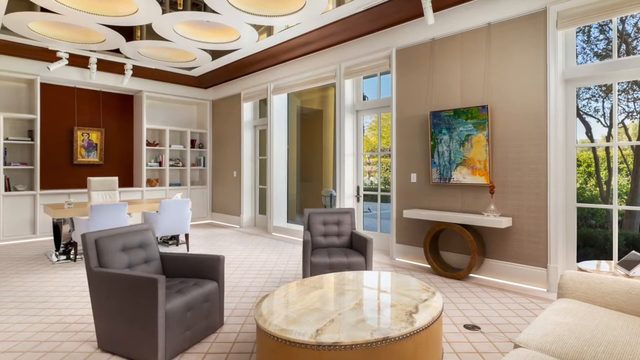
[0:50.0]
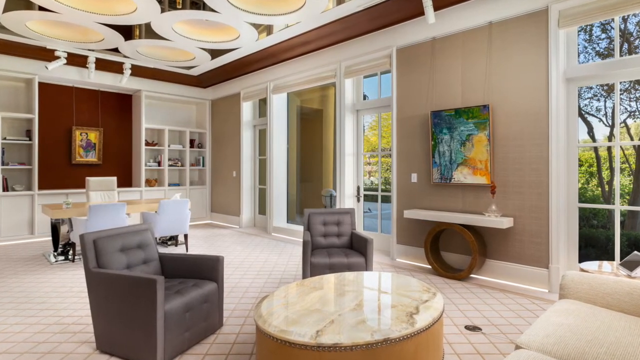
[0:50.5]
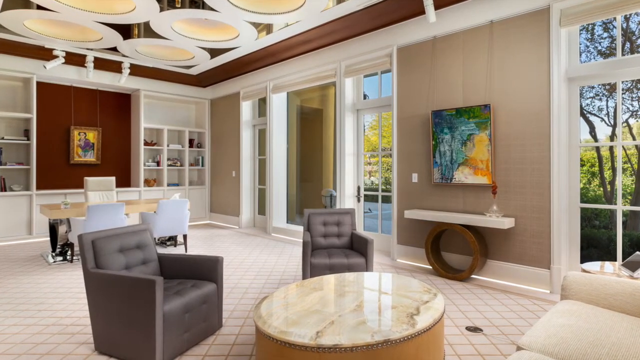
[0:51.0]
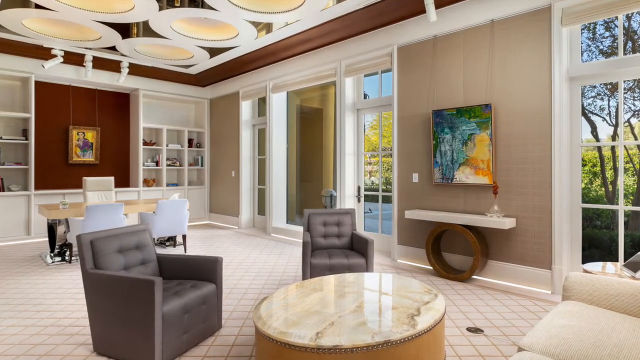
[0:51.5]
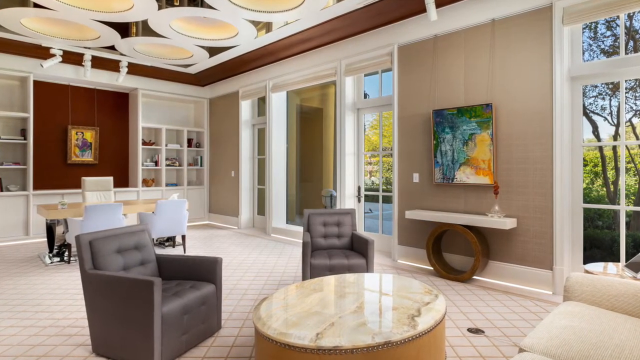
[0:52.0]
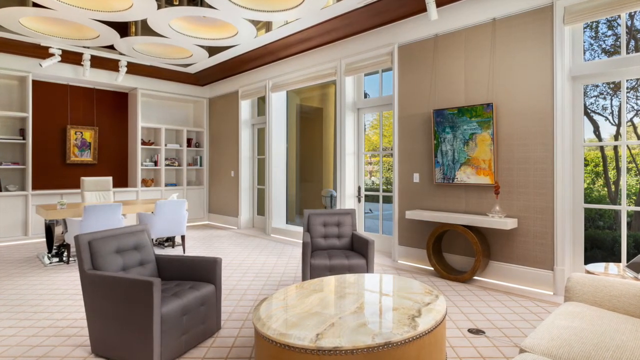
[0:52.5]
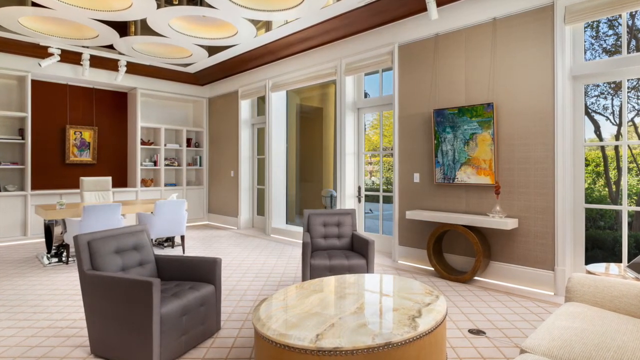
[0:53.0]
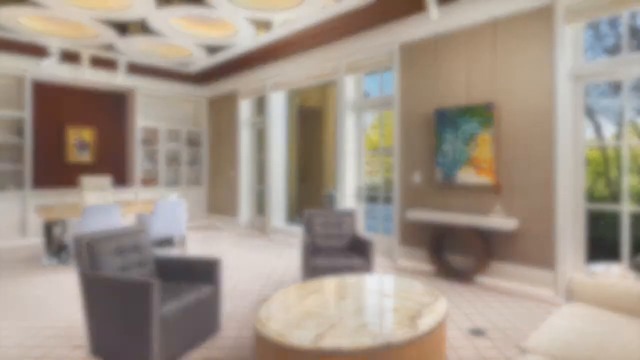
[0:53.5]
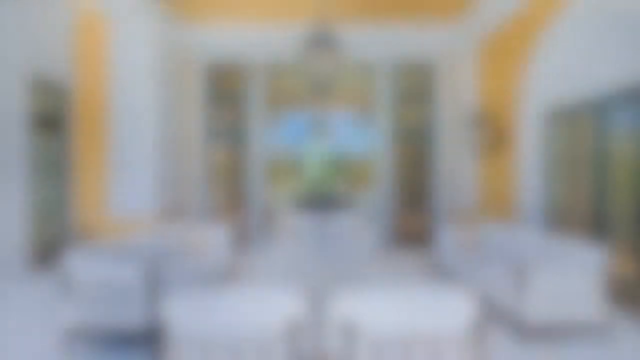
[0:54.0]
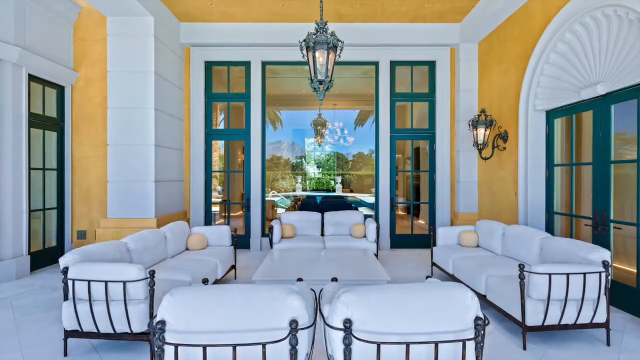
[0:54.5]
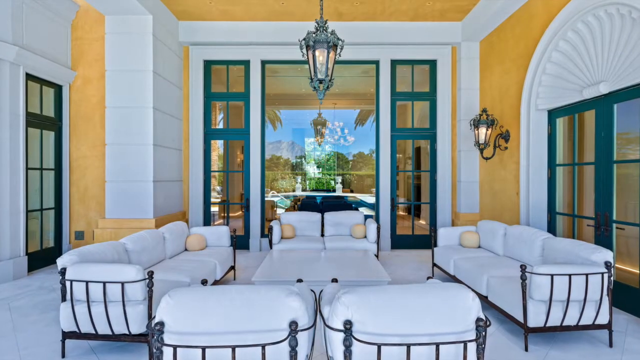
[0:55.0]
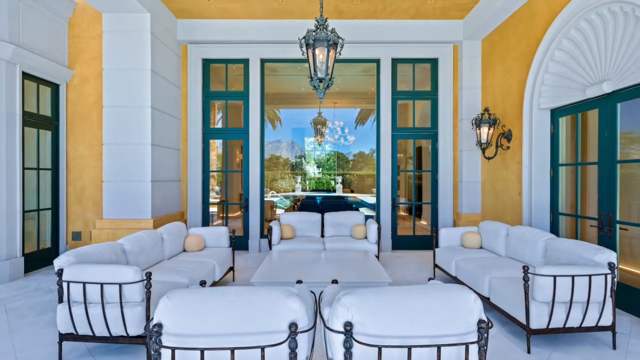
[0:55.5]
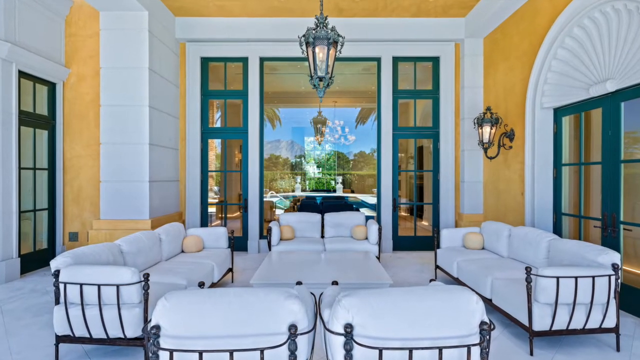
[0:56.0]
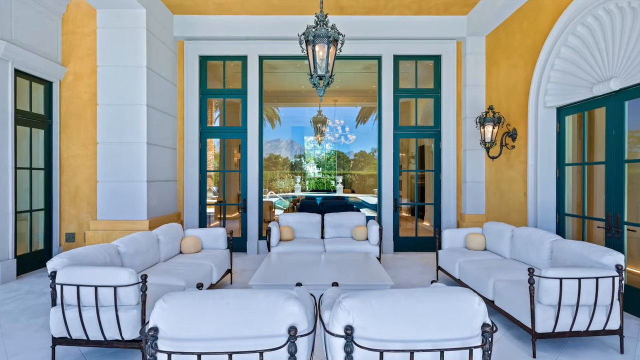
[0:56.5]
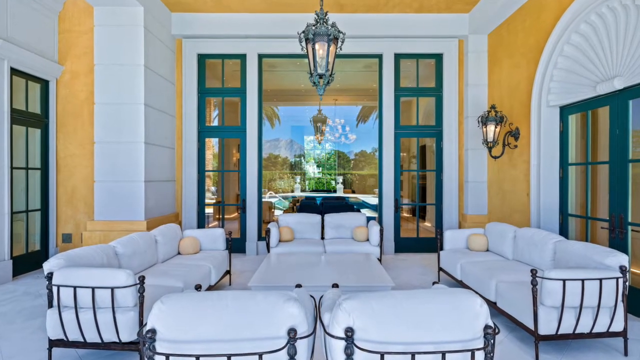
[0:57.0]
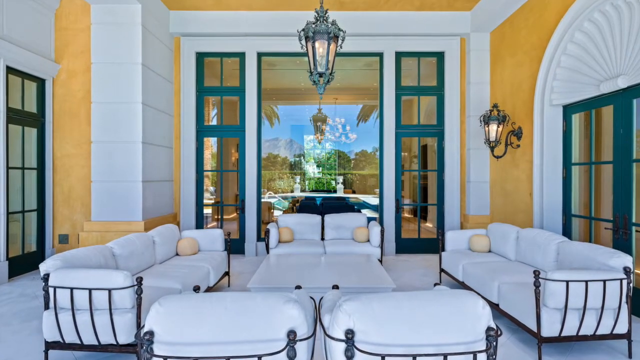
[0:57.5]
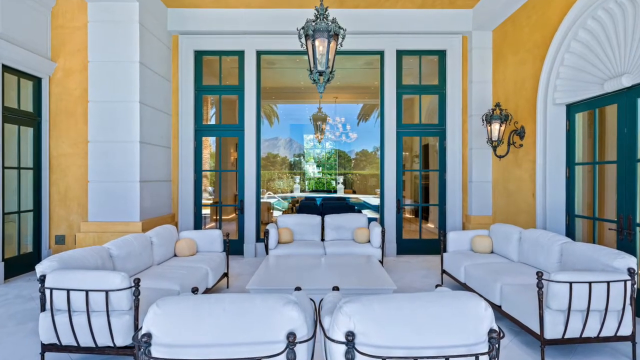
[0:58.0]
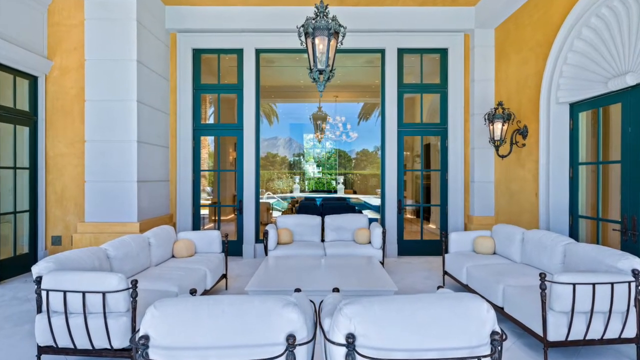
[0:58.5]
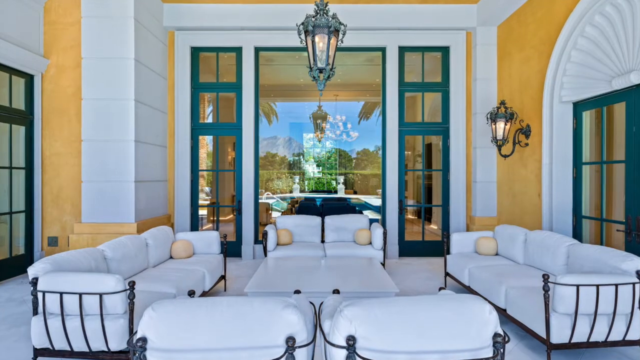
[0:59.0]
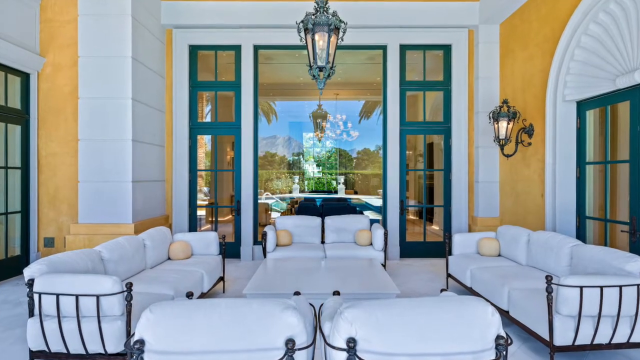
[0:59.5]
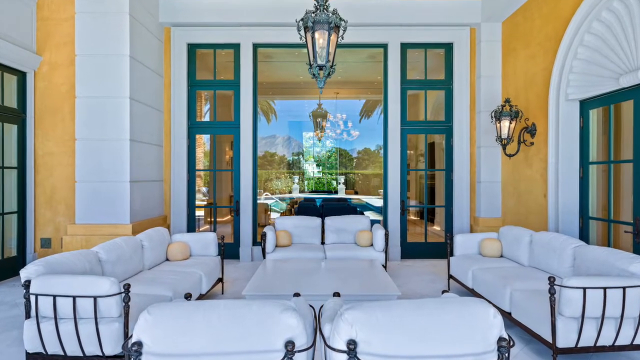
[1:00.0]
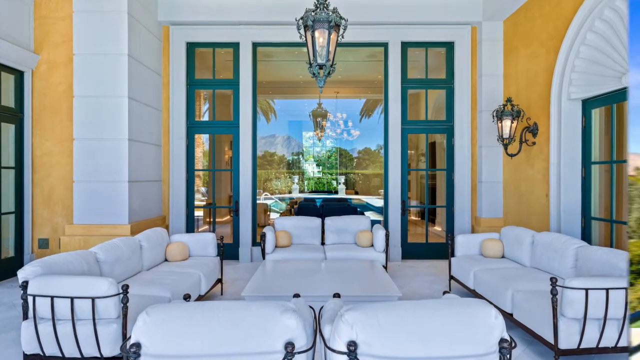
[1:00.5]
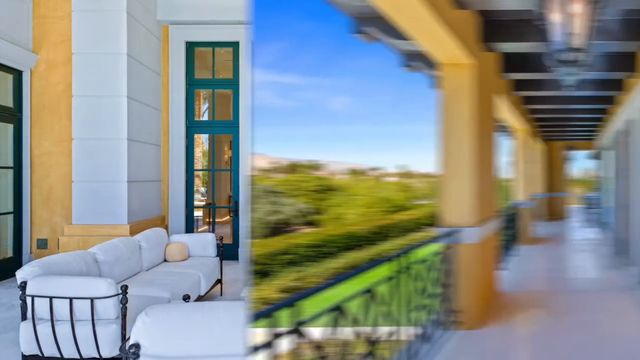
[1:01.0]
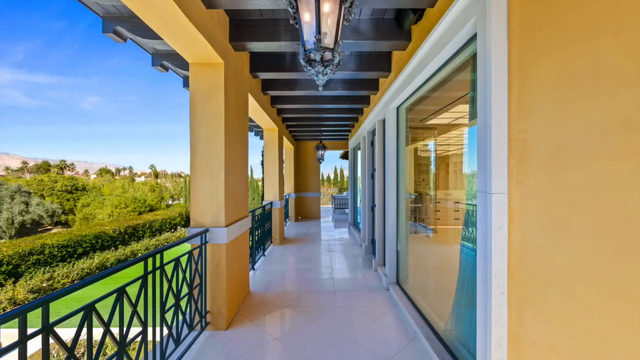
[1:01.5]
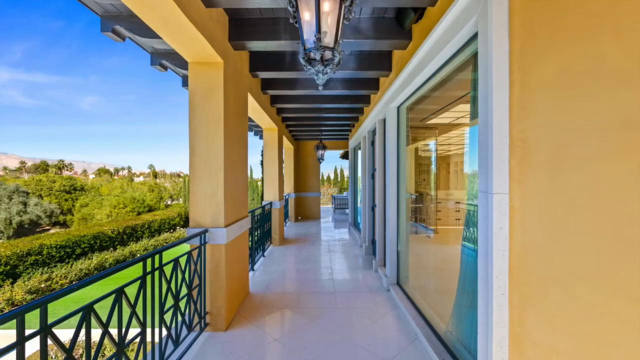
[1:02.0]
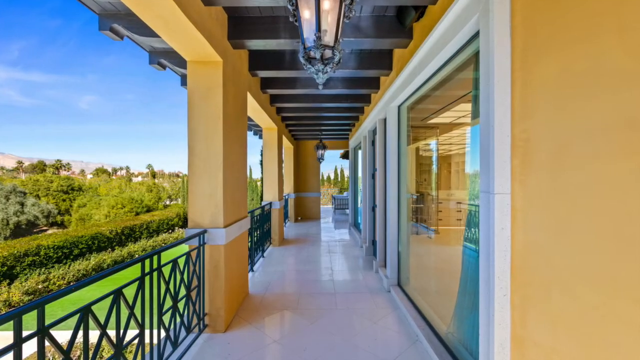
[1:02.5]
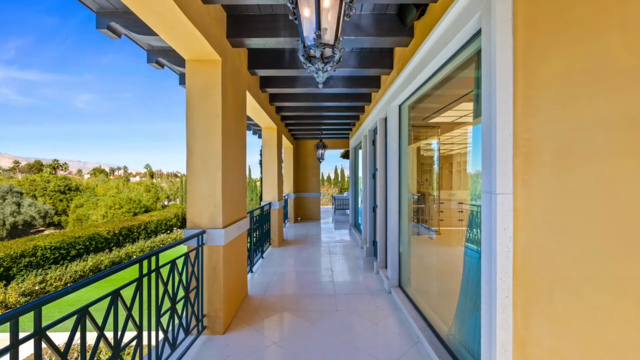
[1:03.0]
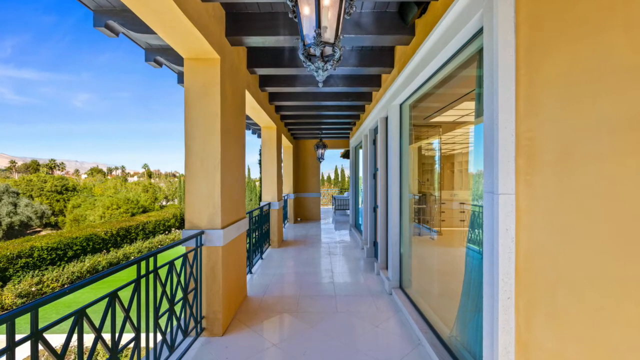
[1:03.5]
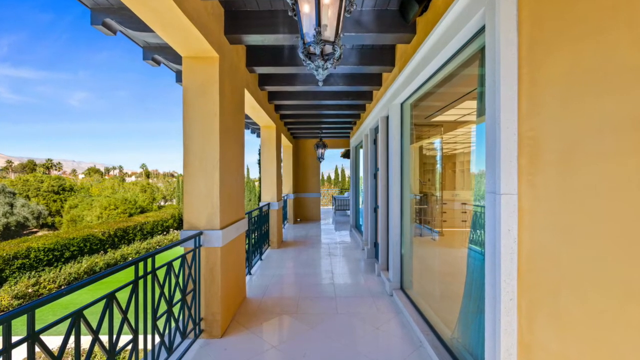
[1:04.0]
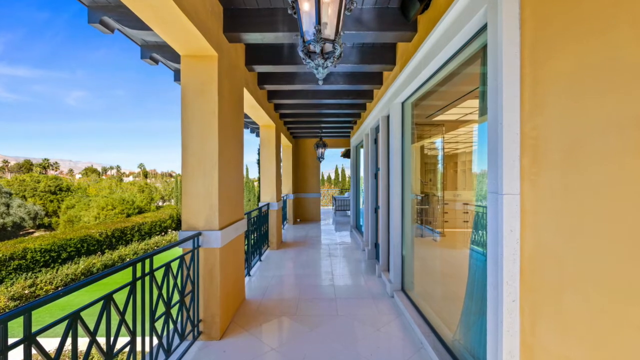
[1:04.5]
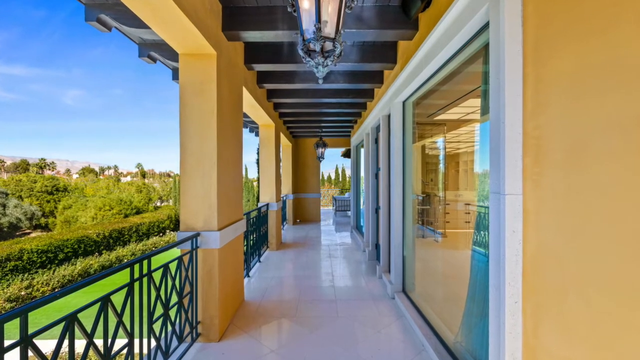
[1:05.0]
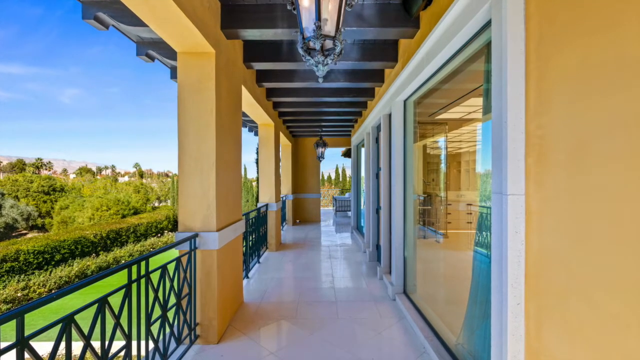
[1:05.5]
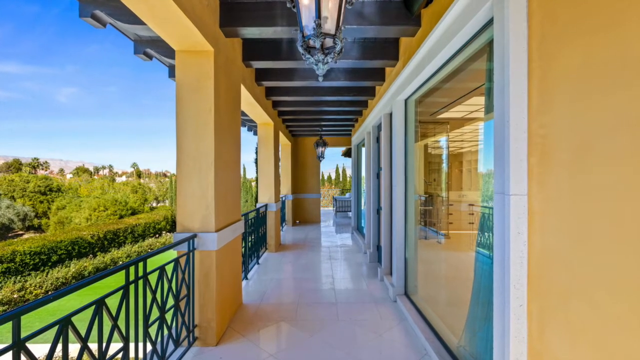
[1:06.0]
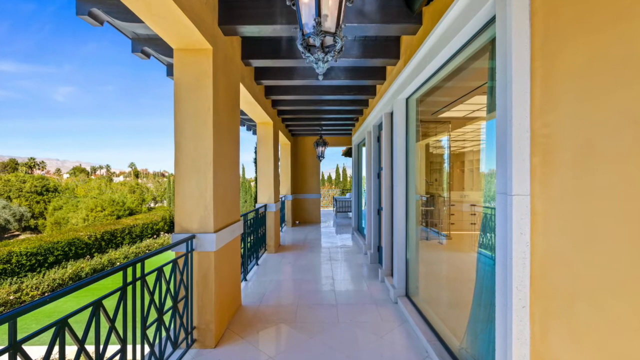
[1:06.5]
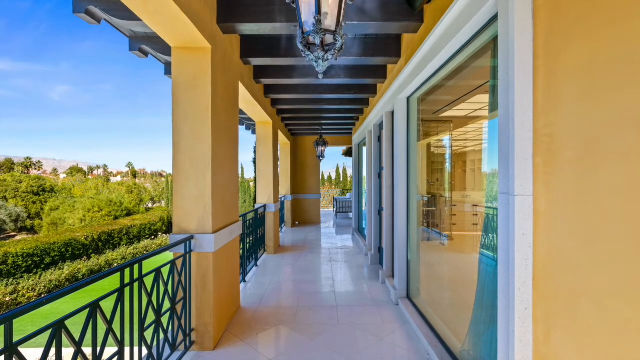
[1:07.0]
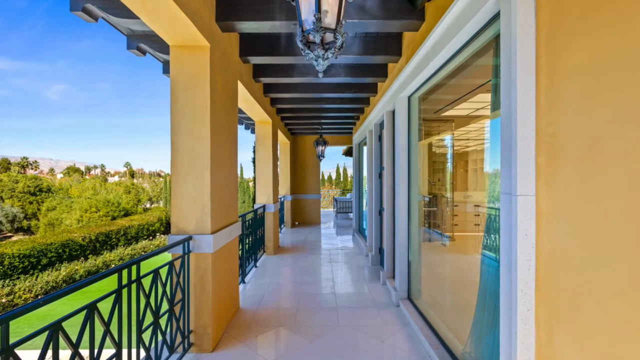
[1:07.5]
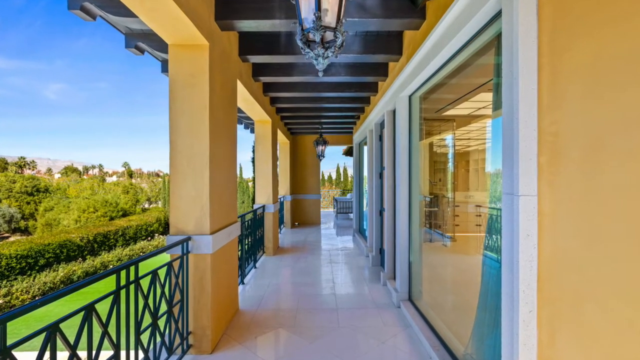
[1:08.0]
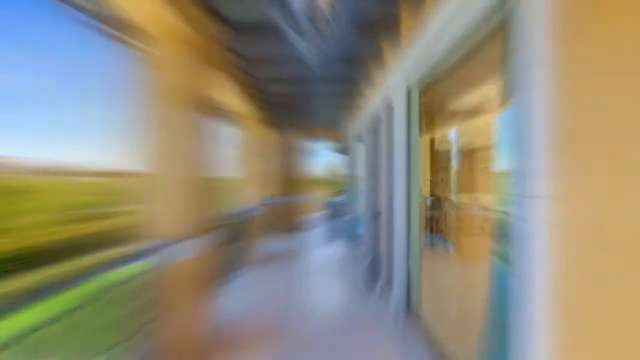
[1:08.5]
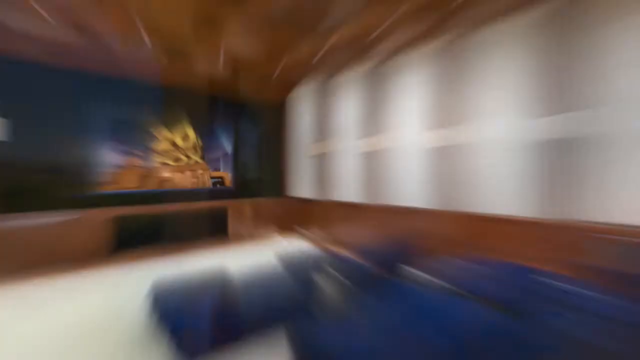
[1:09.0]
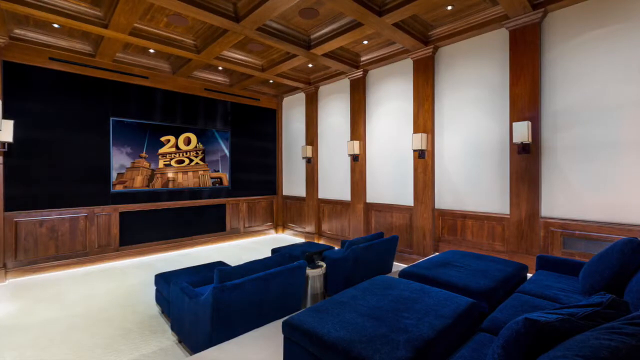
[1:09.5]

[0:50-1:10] From the office, the view moves to a seating area with gold-colored walls, massive sconces with wrought iron framework, and a suspended wrought iron fixture in the middle of the room. White couches face each other: a two-person couch in the distance, seating for three on both the right and left sides, and additional seats closer to the camera. A marble-top table is in the center of the room. The room has white stone-looking corner features, gray frames around the windows, and shell-shaped areas above the doorways, giving it an ornate, elaborate feel. The scene transitions to an open, porch-like area with a polished outdoor tile floor, a continuation of the blue-gray design with heavy beams, and more wrought iron fixtures suspended in the roofed outdoor area, overlooking hedges, blue sky and a city view in the distance. There is a glass wall on the right and doorways into different parts of the structure. Finally there is a quick view of a media room with dark blue cushioned seating, a wood-panel ceiling, and light-colored walls with brown vertical sidewall beams.